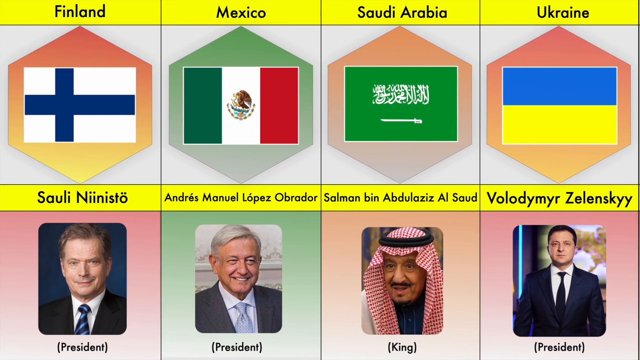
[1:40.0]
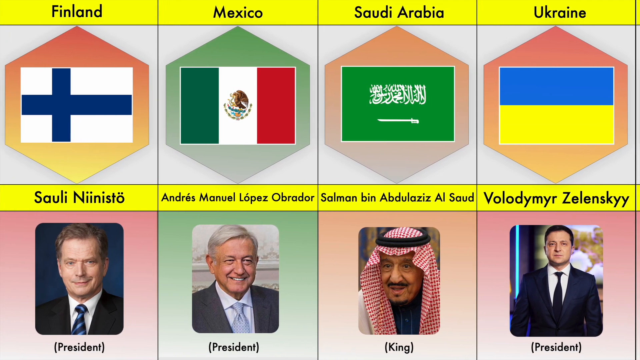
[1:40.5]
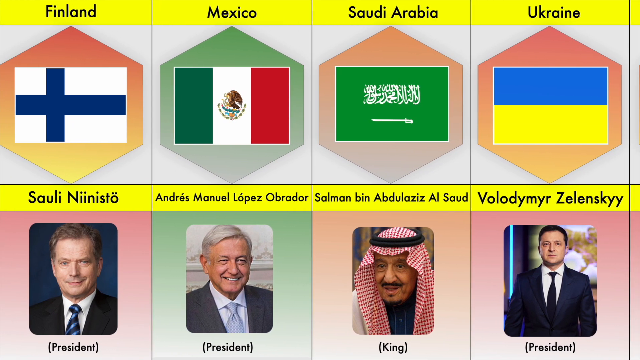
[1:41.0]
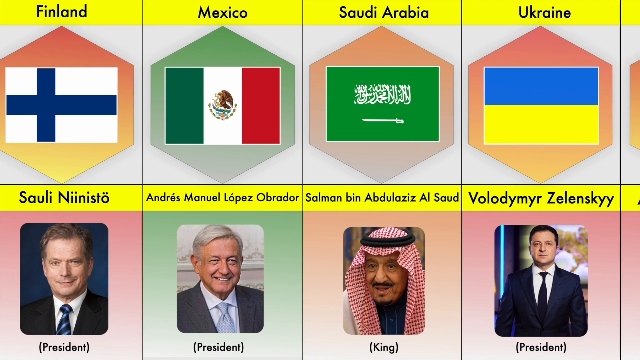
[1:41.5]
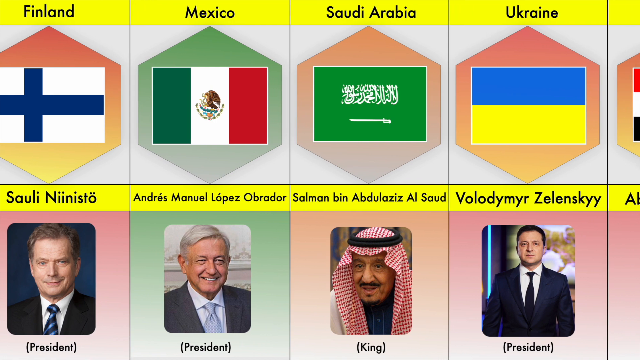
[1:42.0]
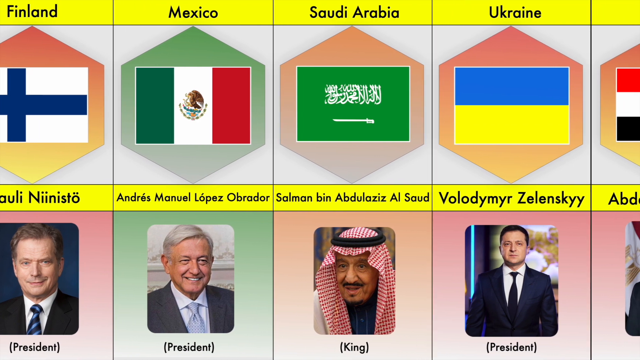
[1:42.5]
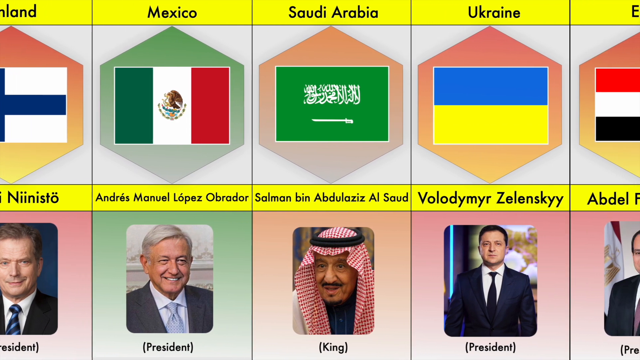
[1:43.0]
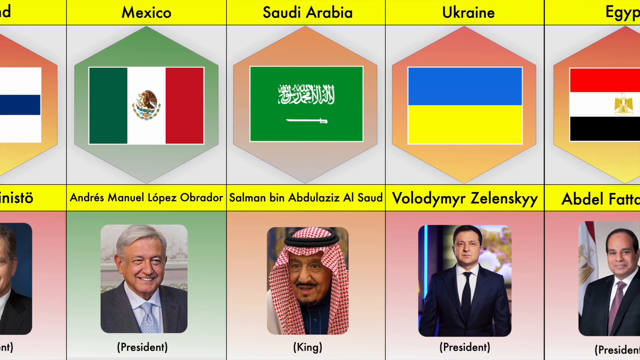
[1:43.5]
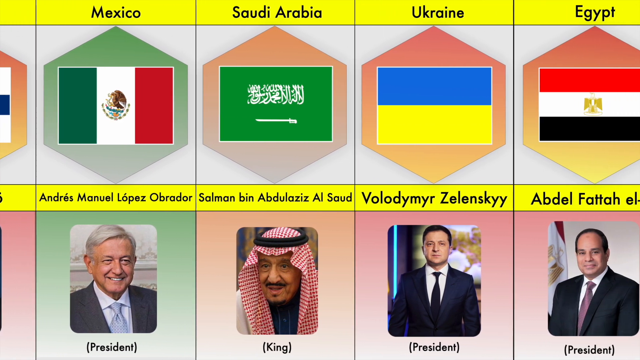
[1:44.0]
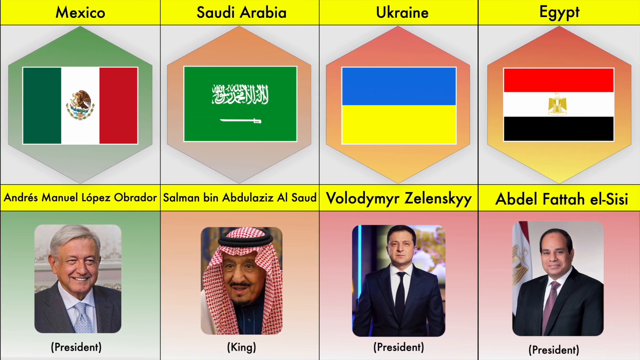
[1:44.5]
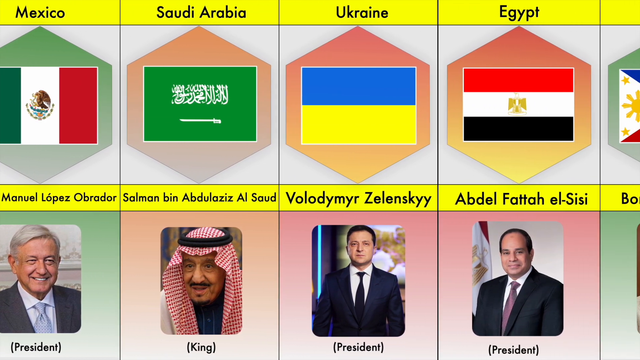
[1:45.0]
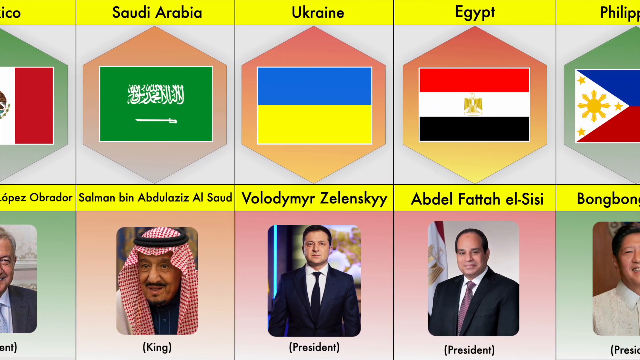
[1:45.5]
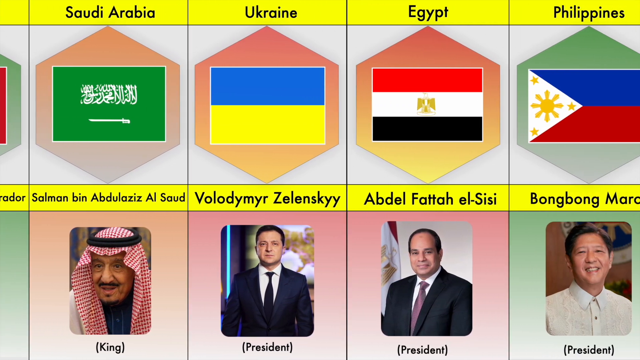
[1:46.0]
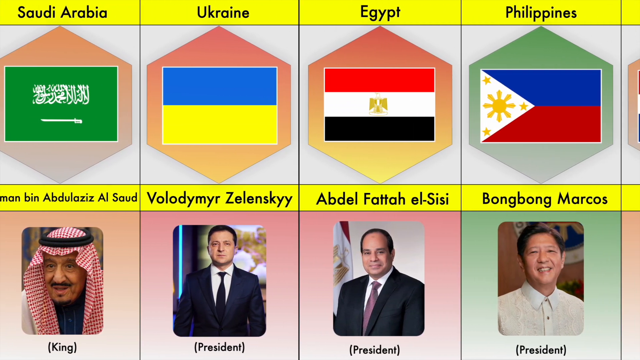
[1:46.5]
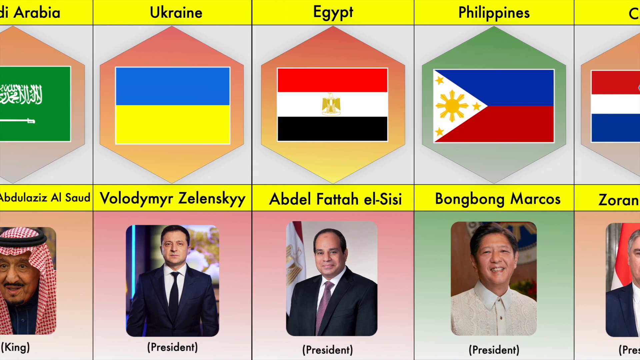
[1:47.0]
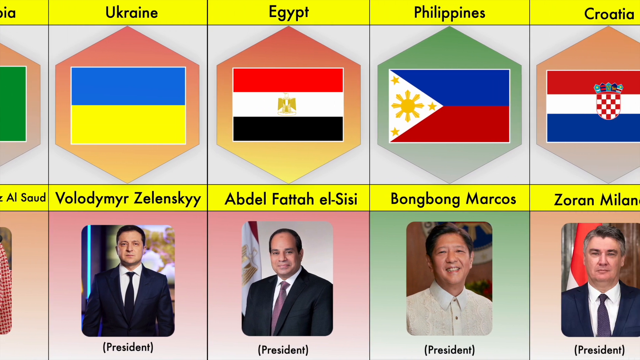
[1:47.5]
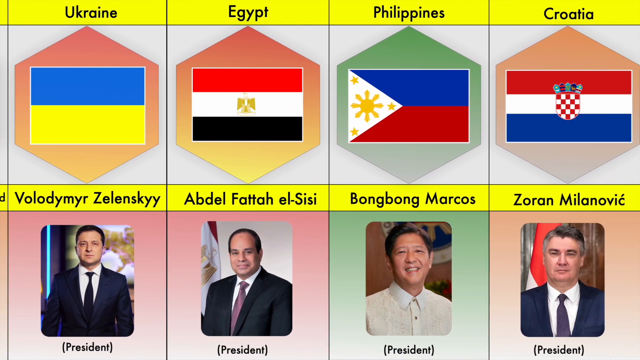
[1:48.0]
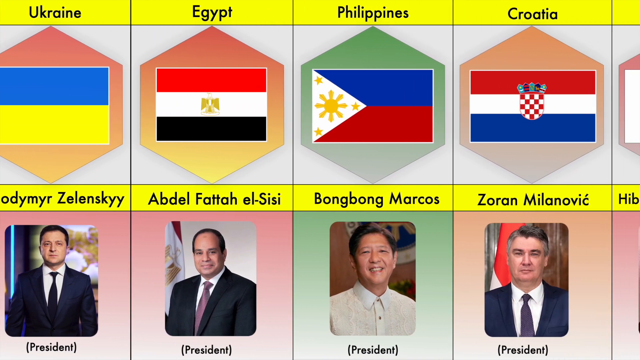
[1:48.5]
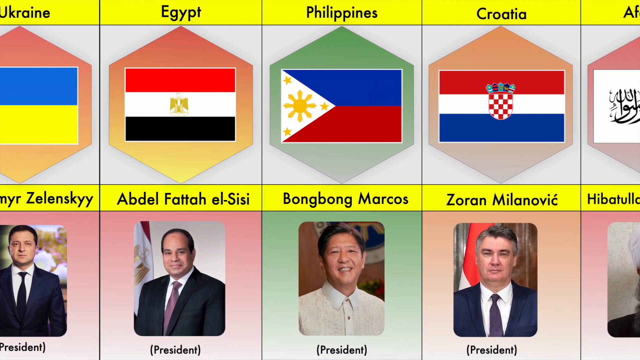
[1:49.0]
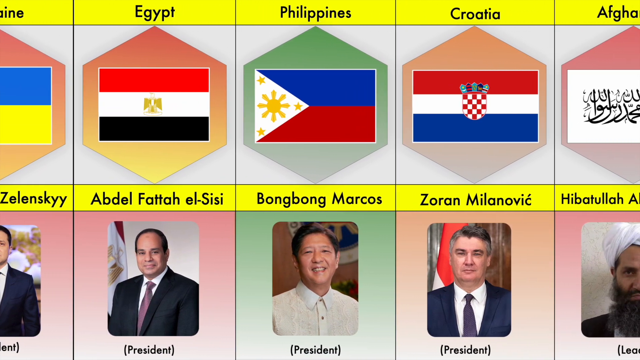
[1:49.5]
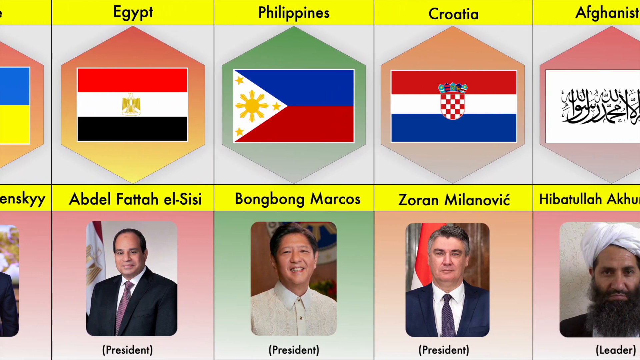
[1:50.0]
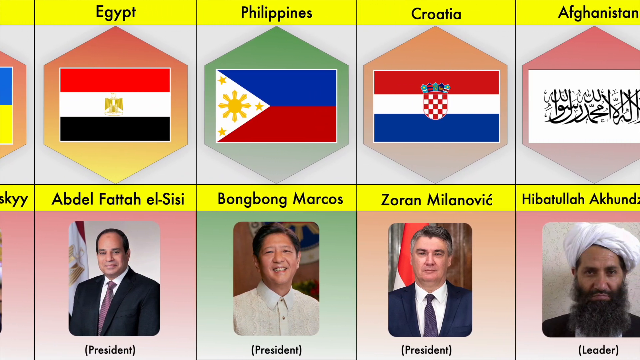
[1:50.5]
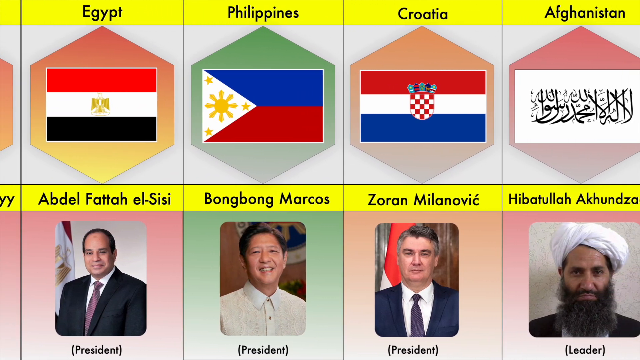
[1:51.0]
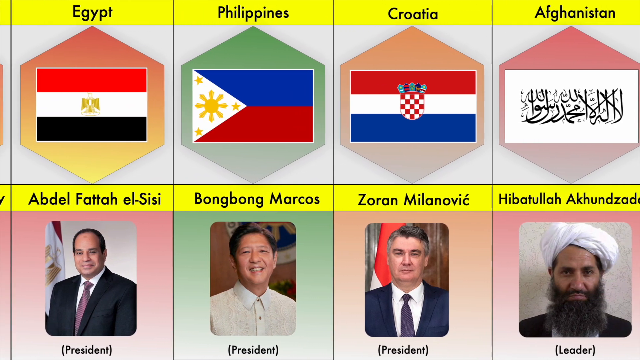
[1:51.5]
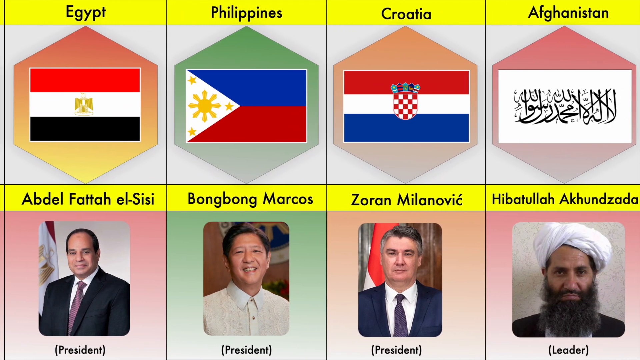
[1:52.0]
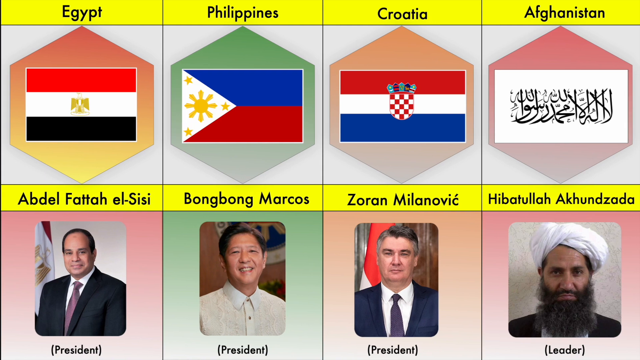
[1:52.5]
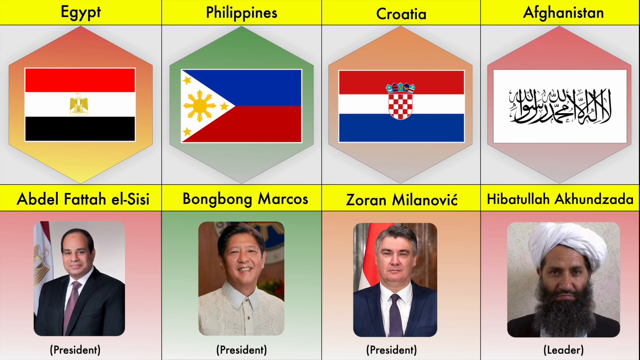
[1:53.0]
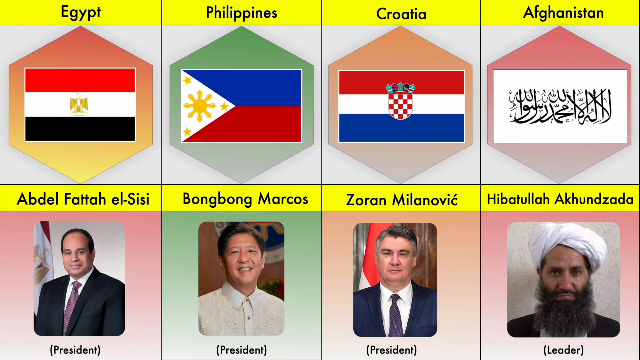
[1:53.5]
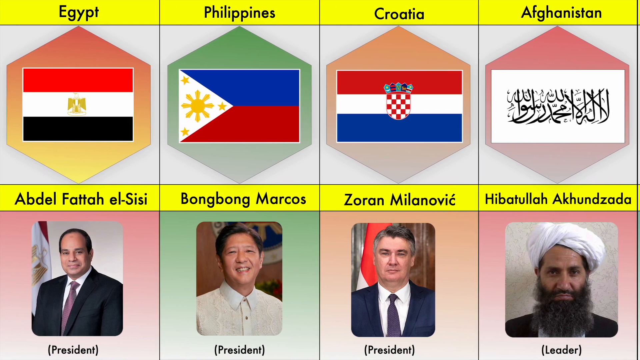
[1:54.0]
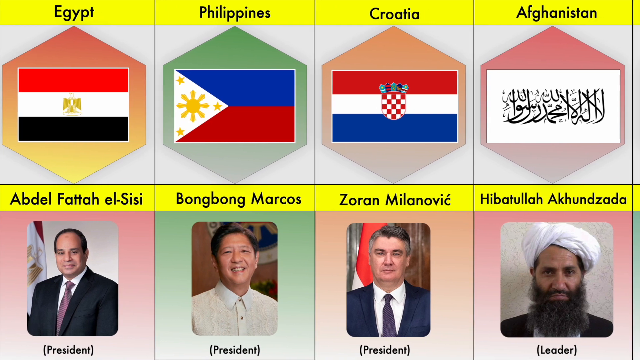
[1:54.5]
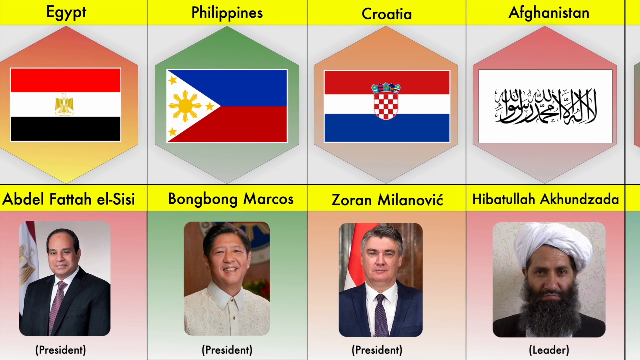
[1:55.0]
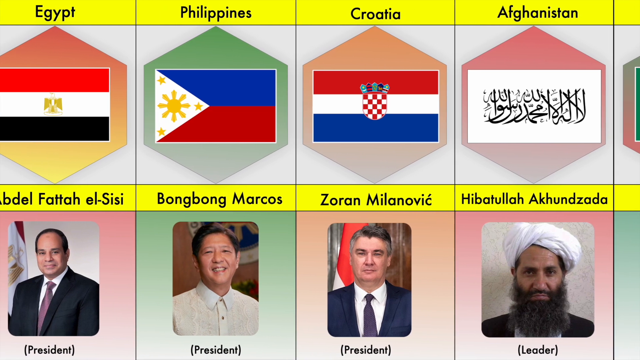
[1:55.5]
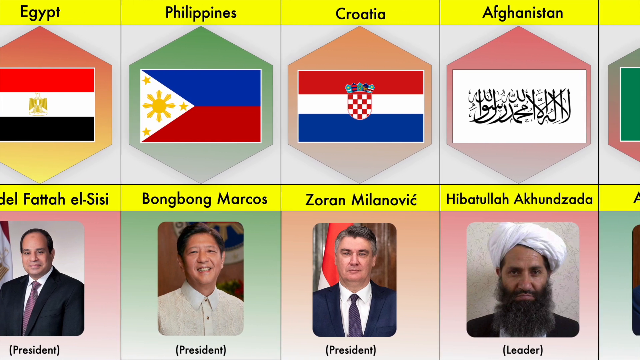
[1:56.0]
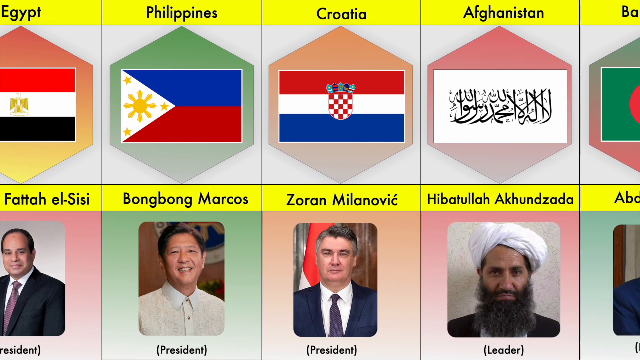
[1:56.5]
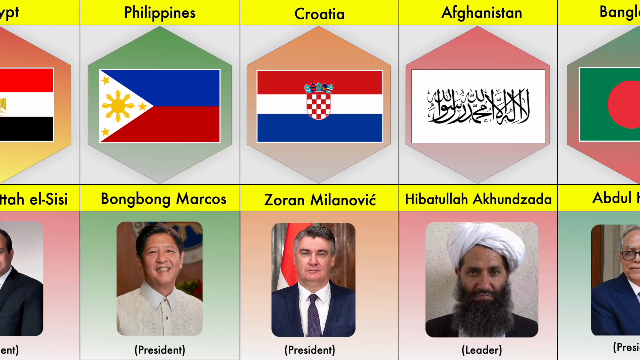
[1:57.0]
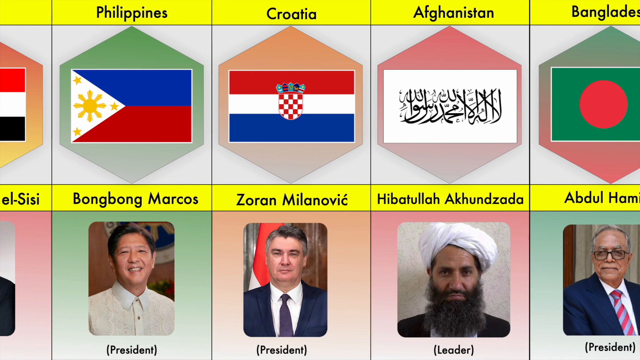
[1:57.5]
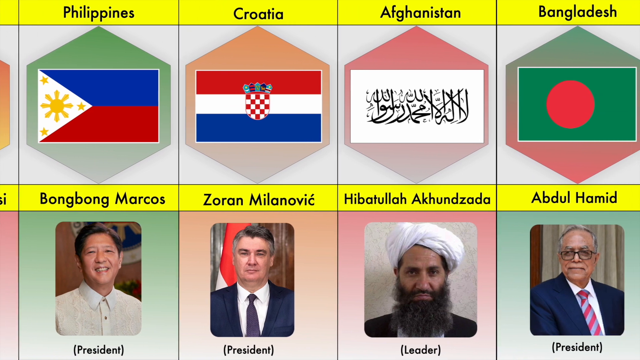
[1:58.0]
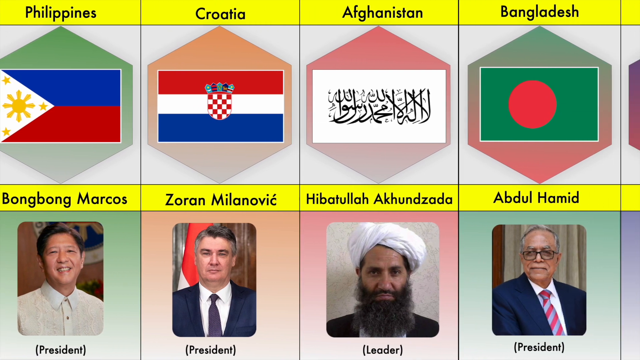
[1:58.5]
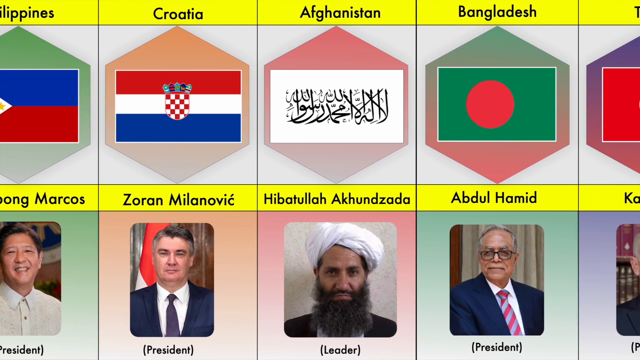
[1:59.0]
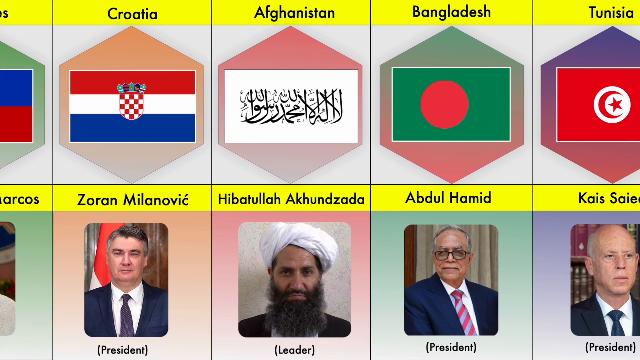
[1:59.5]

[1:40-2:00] Leaders of various countries are shown at the bottom of the screen. They all appear to be male, all look directly into the camera with a stern expression, and all seem very serious. One person, Hidibula Akbizanda, leader of Afghanistan, has only the title of leader, unlike many of the others, who have president or prime minister written under their names. The countries seem random and unrelated to one another, and their flags are all at the top of the screen, each representing one of the leaders.